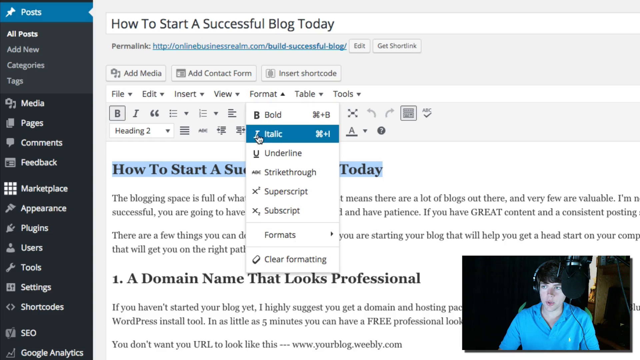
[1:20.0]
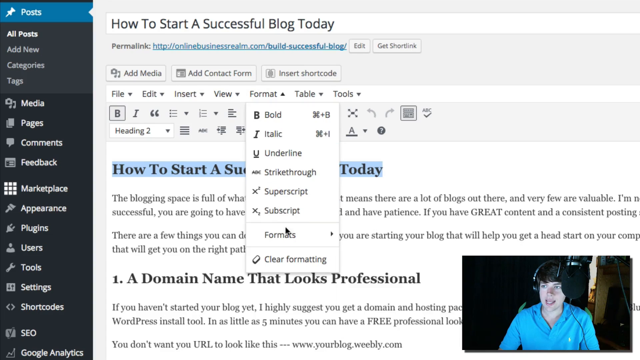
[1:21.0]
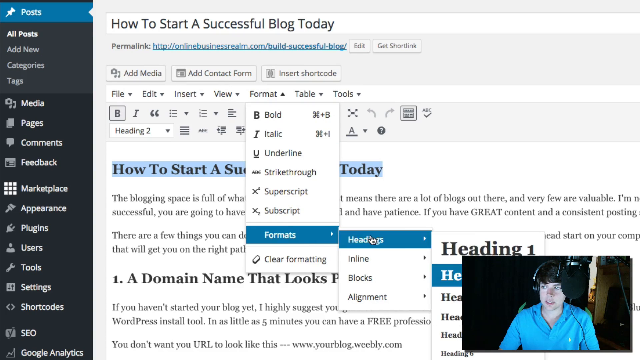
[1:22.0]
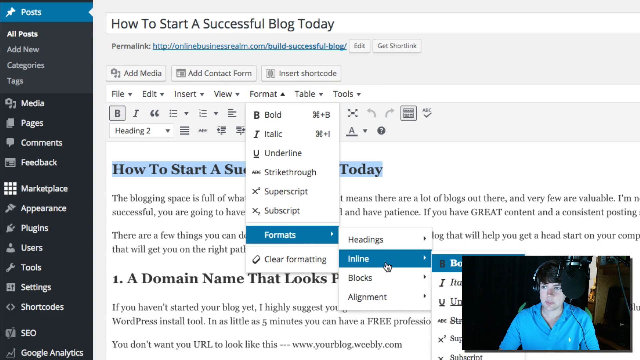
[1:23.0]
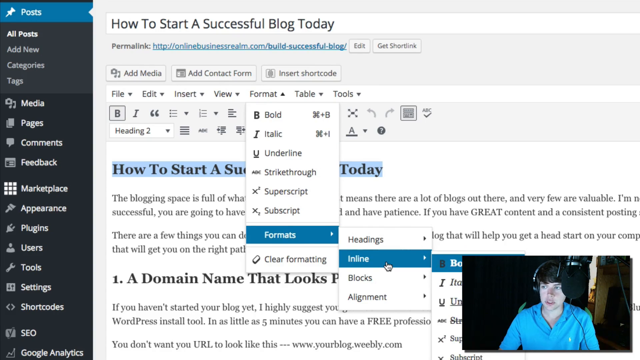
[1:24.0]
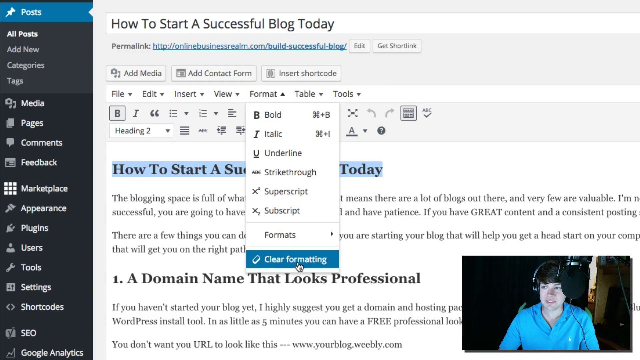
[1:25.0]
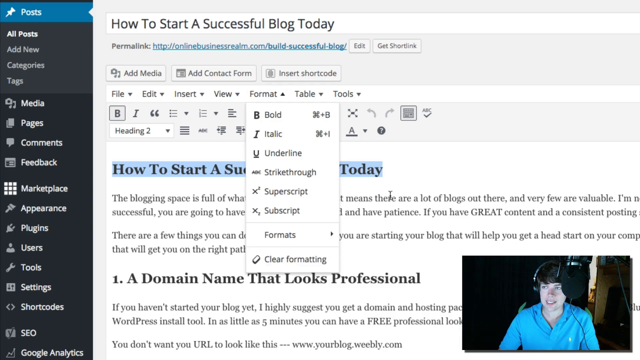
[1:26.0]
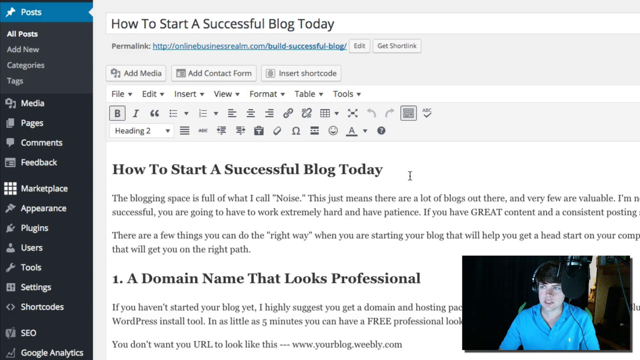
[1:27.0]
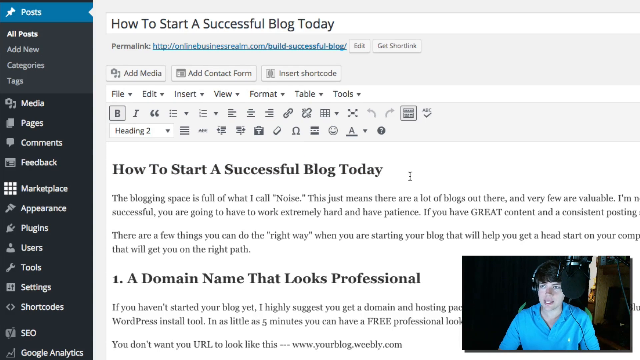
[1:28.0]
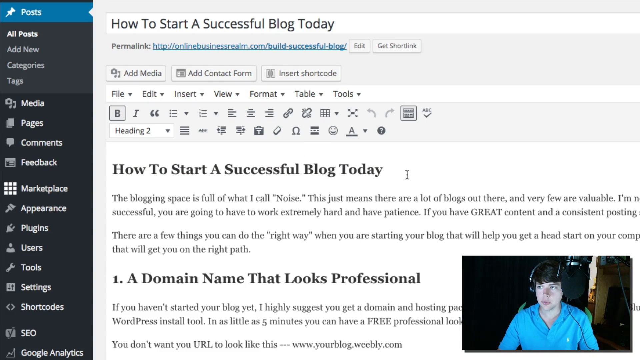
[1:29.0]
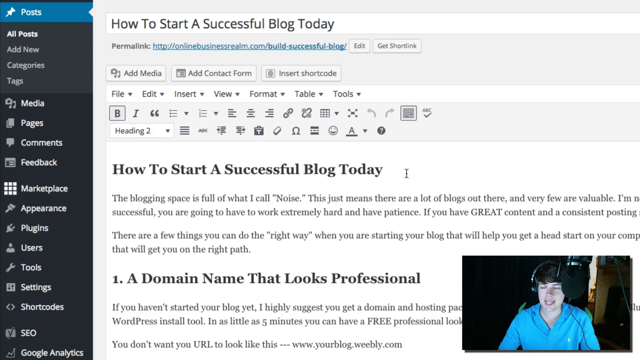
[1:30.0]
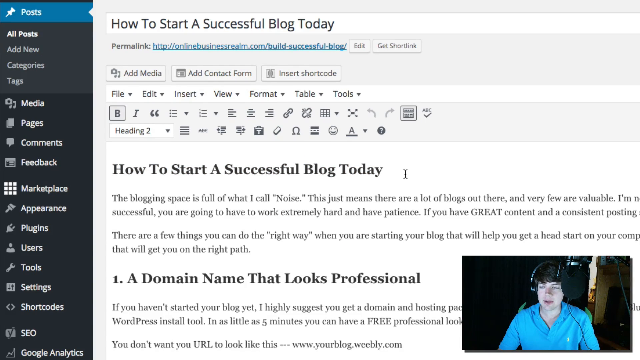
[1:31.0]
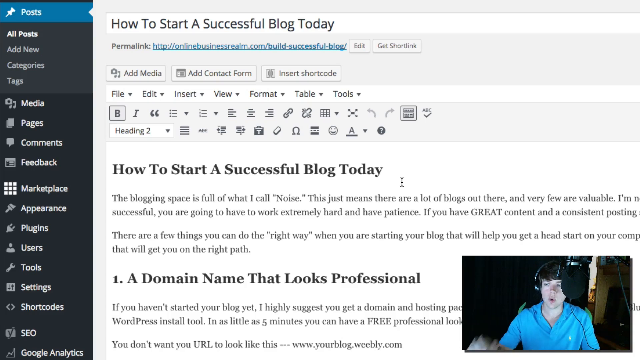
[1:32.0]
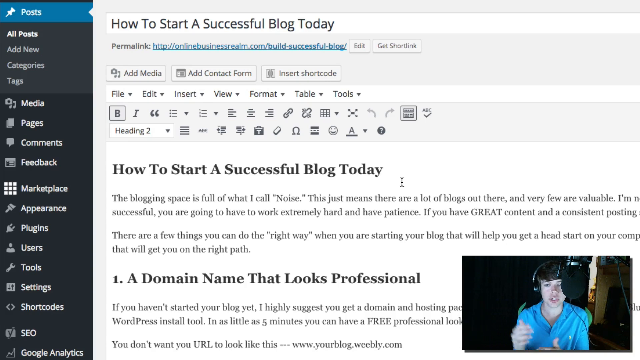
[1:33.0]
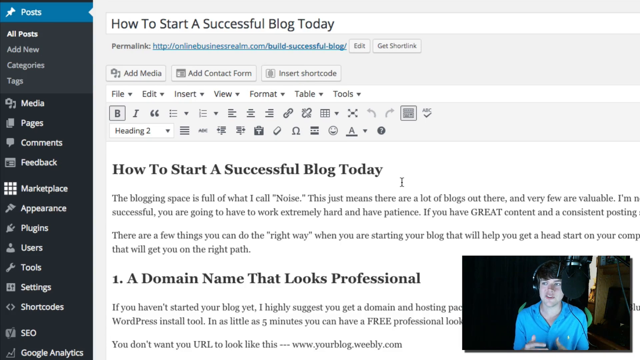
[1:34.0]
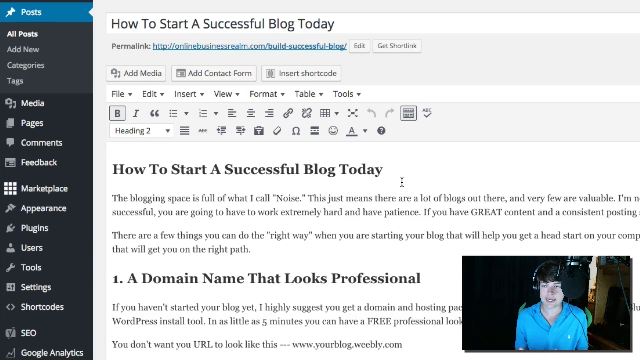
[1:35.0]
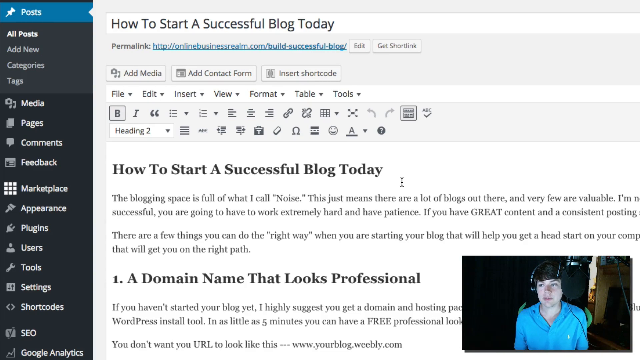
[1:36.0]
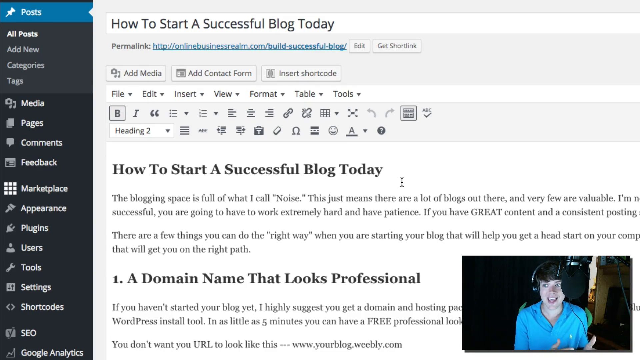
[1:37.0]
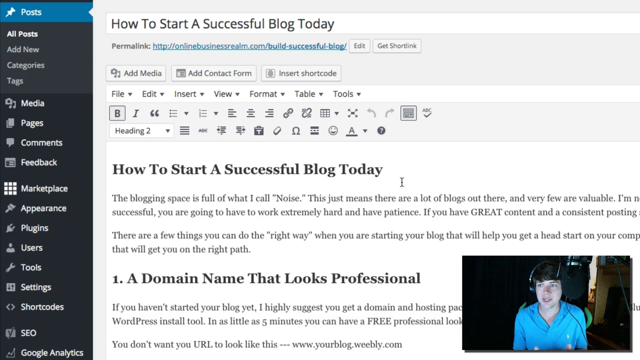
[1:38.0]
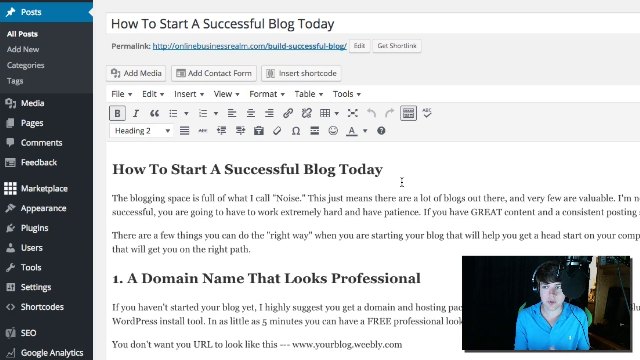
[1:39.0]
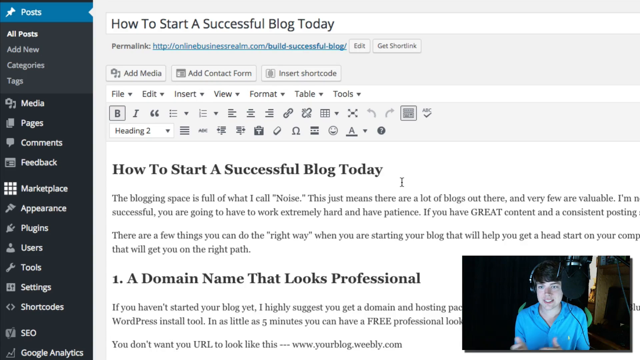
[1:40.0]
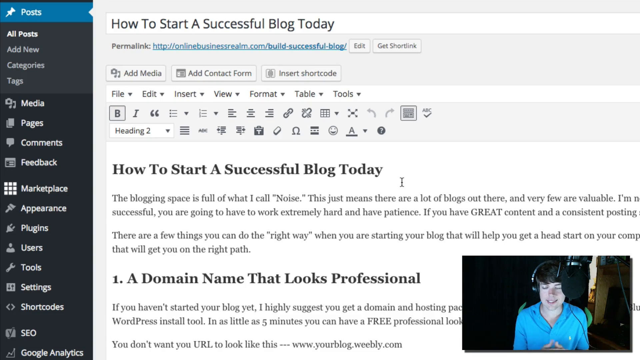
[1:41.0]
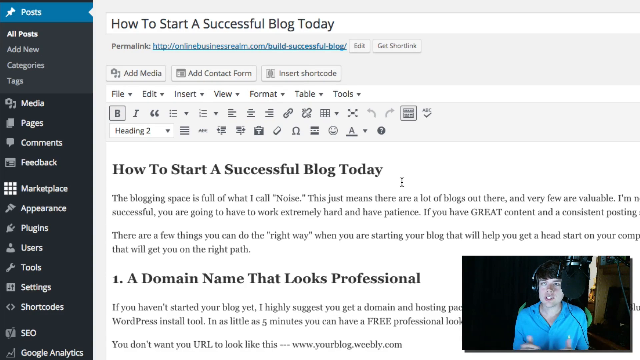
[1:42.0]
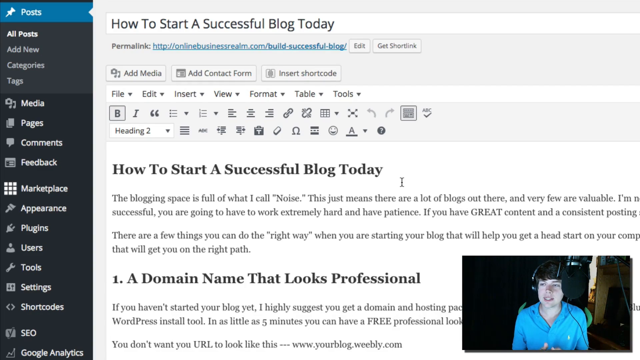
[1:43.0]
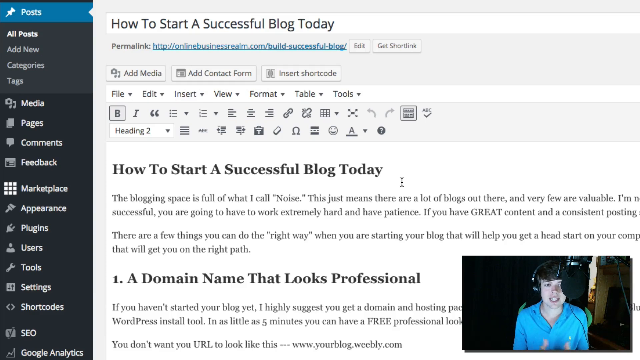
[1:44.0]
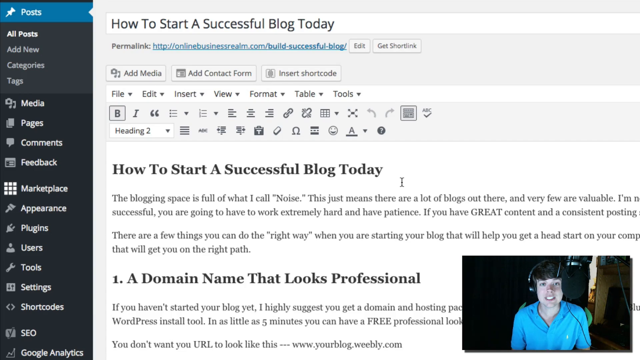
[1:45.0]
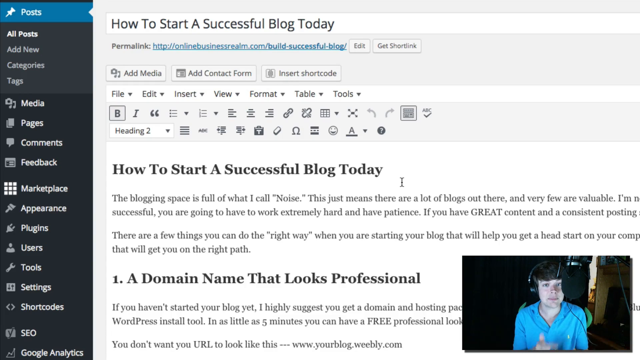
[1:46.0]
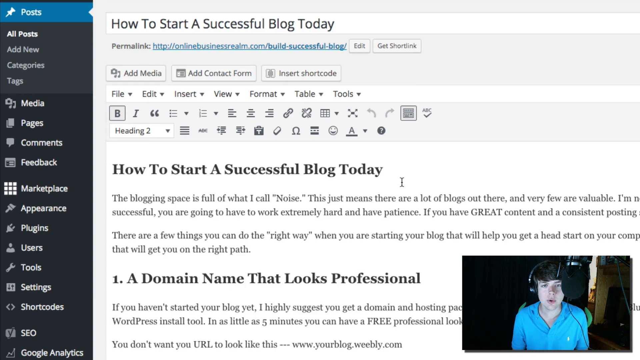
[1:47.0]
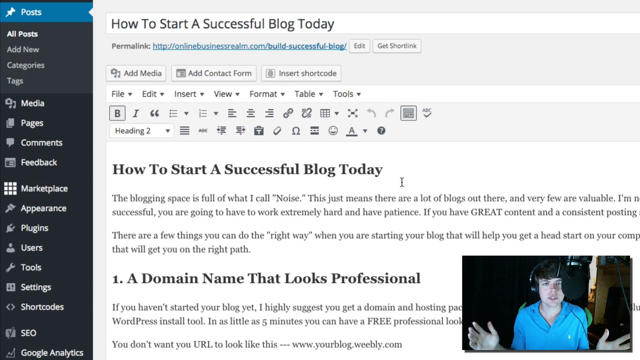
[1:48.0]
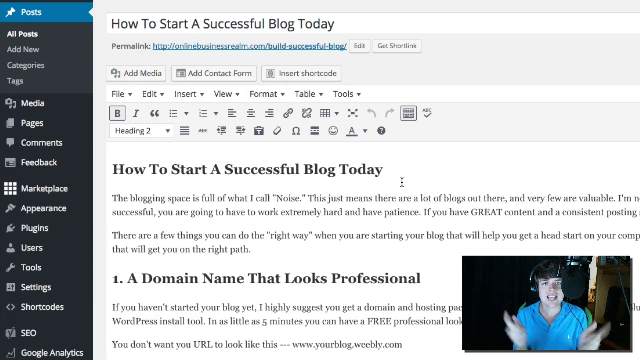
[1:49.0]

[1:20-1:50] The page titled "How to Start a Successful Blog Today" is shown, with the title at the very top and a permalink for onlinebusinessrealm.com beneath it. Underneath that is a content menu with "add media", "add contact forms" and a short code, followed by the file, edit, insert, view, format and table menus, controls and toolbars. At first the toolbar is highlighted and the format tab with bold, italics and underline is open. The live feed in the bottom right corner shows a young man wearing a blue shirt and headphones. He scrolls through the different formats a few times, showing options to clear formats and add different ones, then shows that titles and different parts of the text can be changed with different formats and tools just by highlighting those parts.